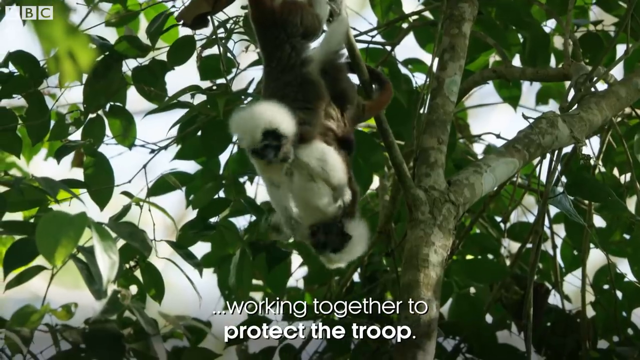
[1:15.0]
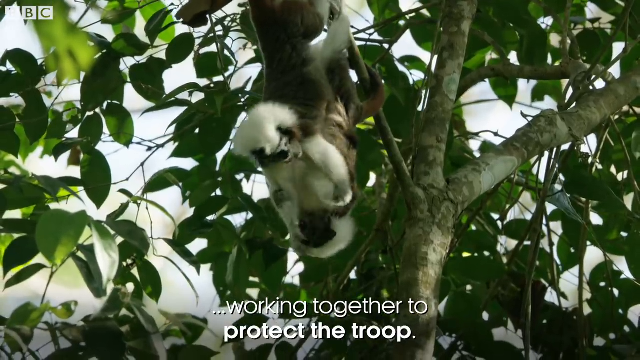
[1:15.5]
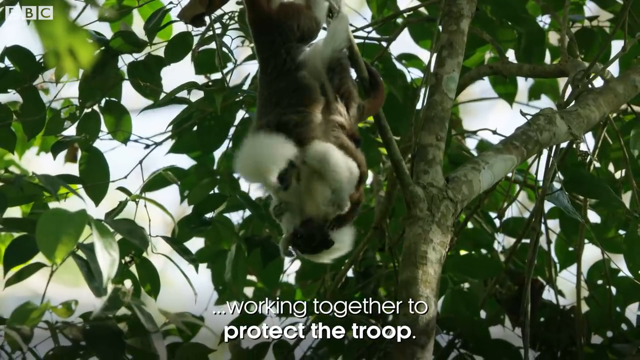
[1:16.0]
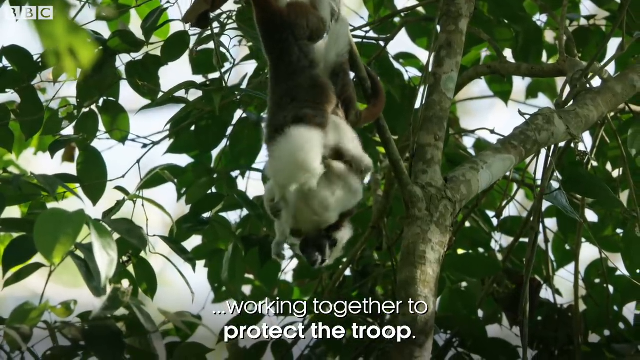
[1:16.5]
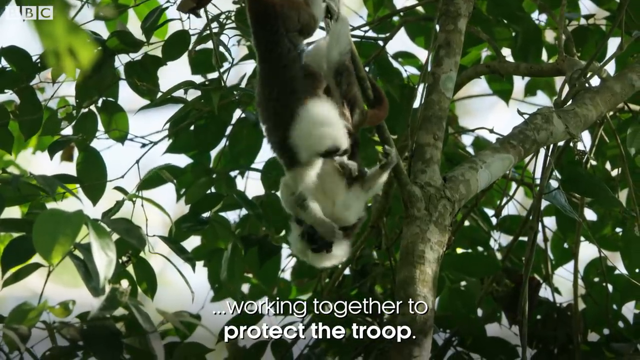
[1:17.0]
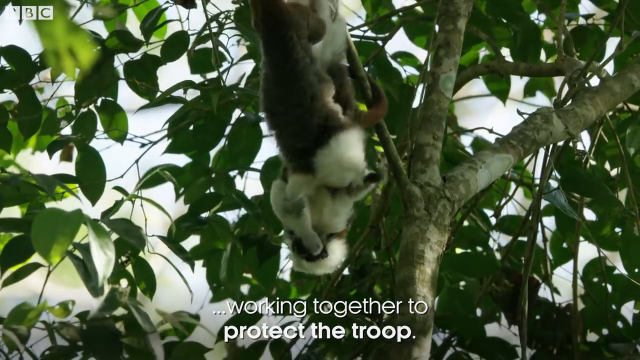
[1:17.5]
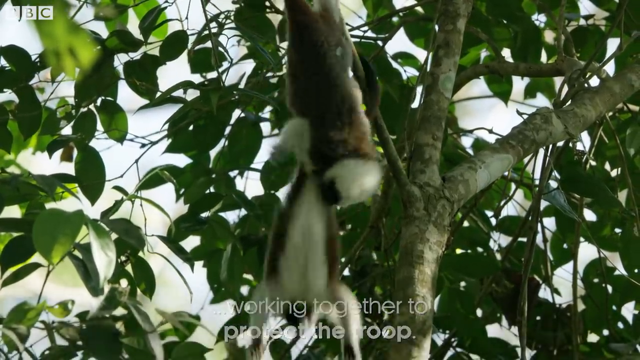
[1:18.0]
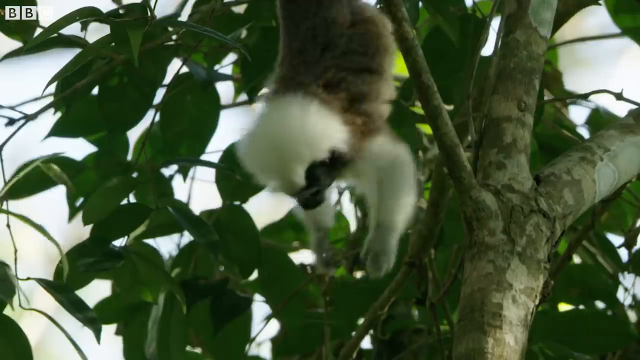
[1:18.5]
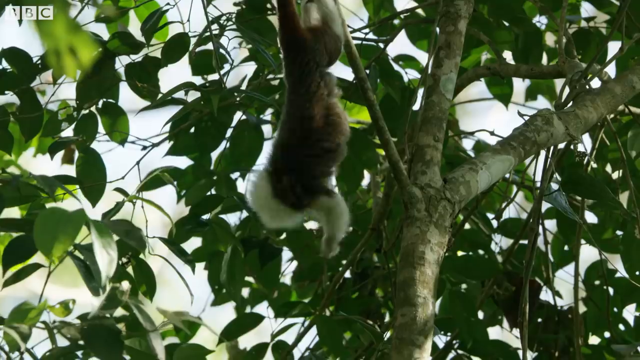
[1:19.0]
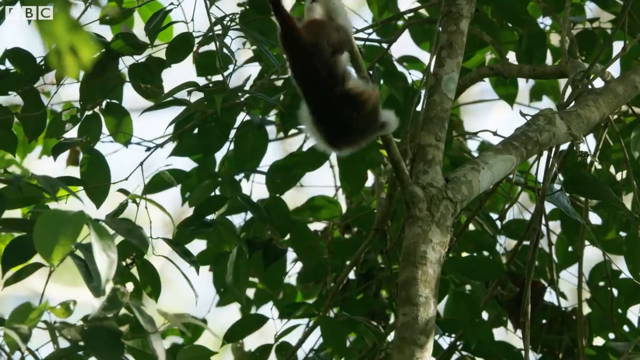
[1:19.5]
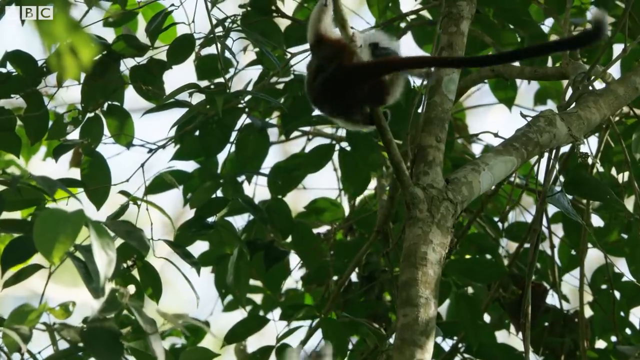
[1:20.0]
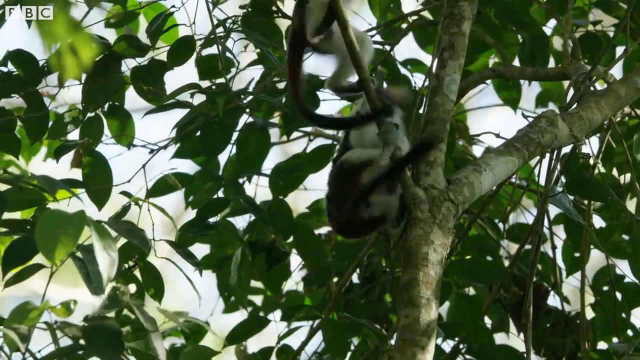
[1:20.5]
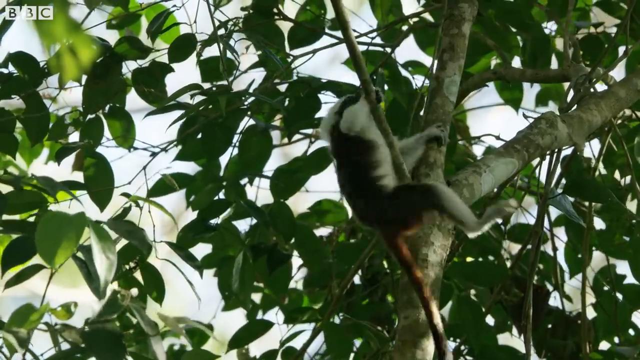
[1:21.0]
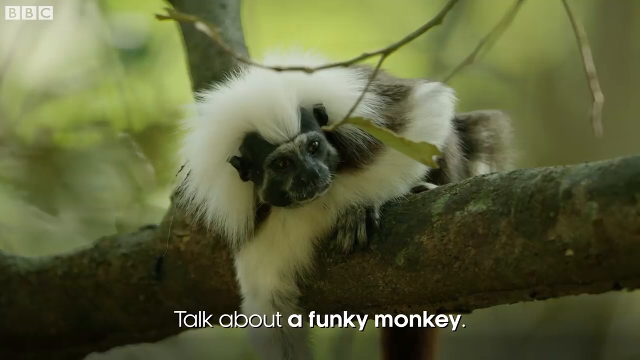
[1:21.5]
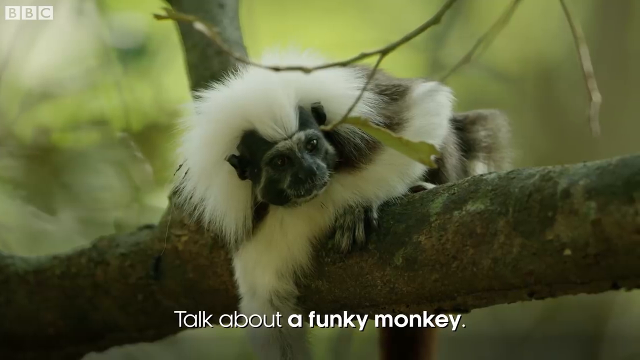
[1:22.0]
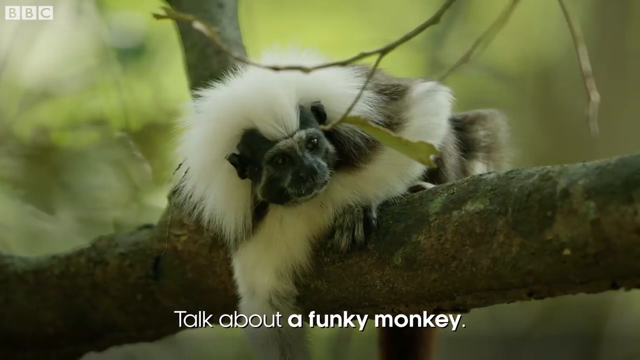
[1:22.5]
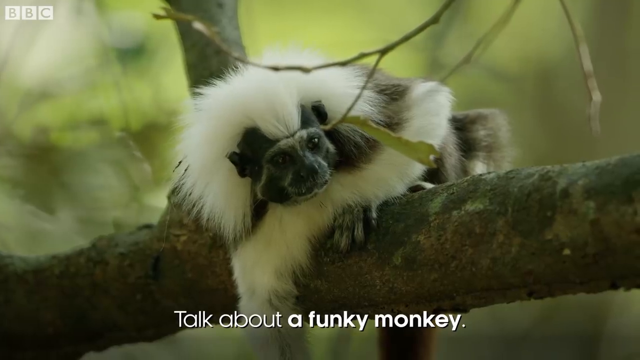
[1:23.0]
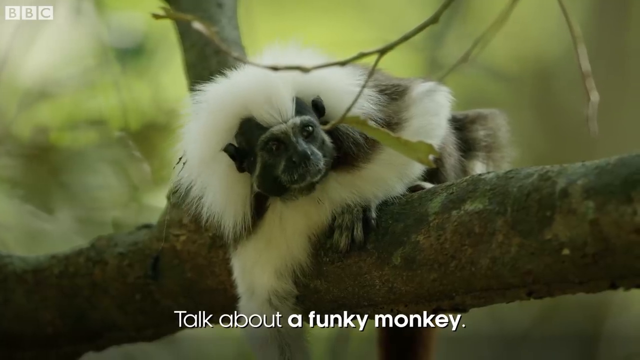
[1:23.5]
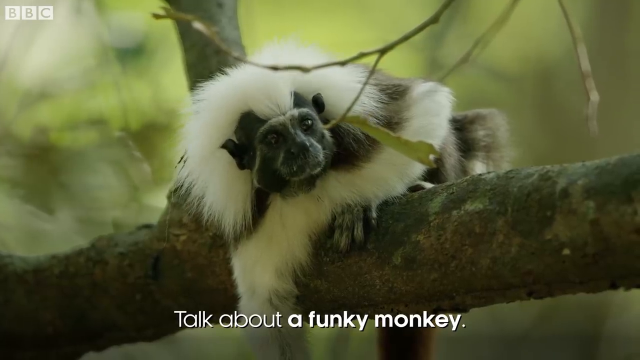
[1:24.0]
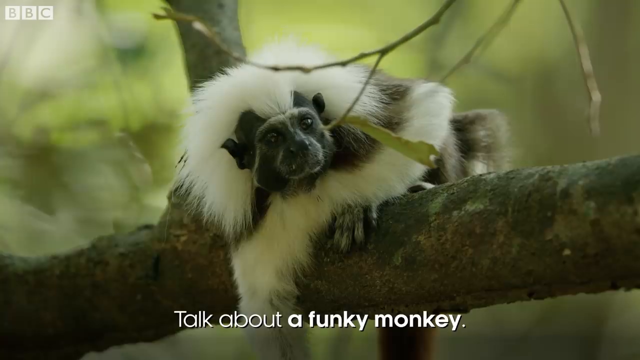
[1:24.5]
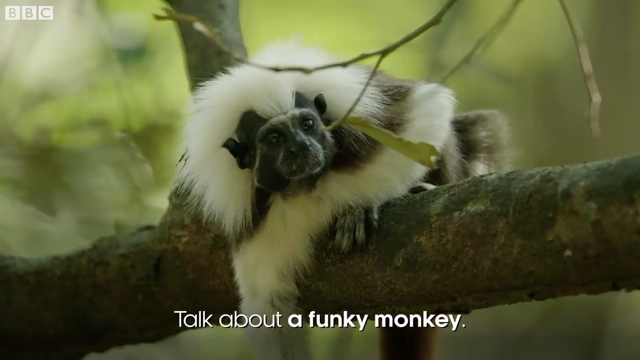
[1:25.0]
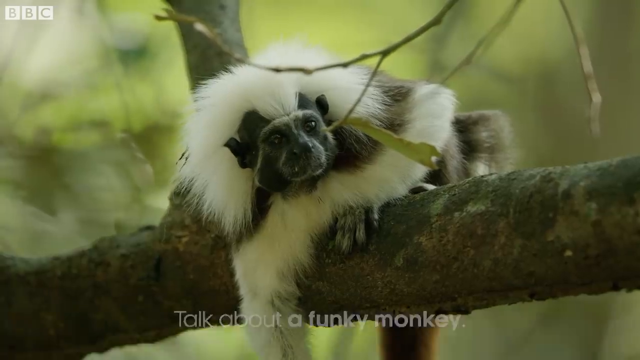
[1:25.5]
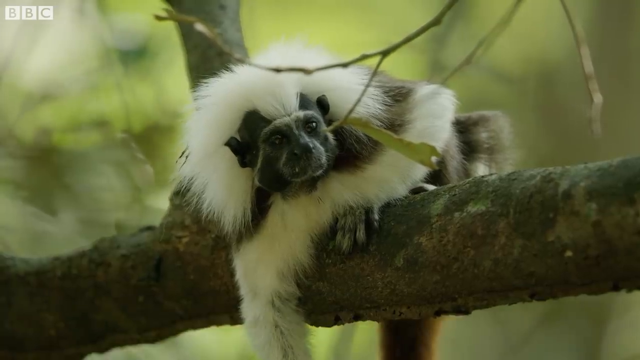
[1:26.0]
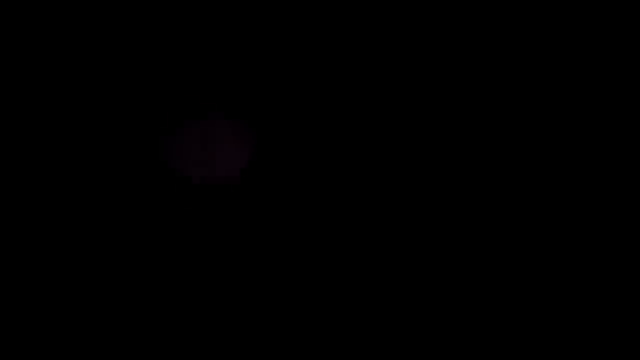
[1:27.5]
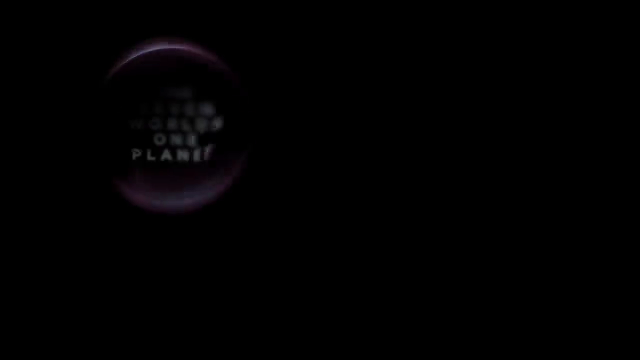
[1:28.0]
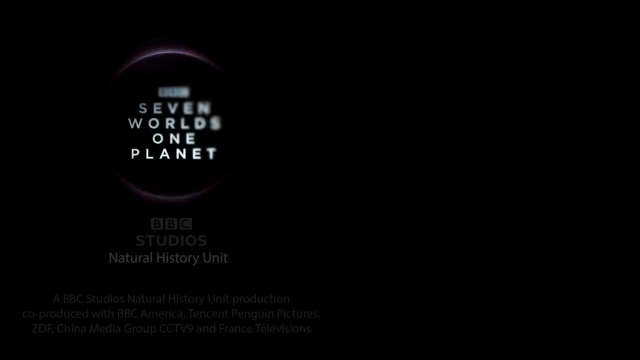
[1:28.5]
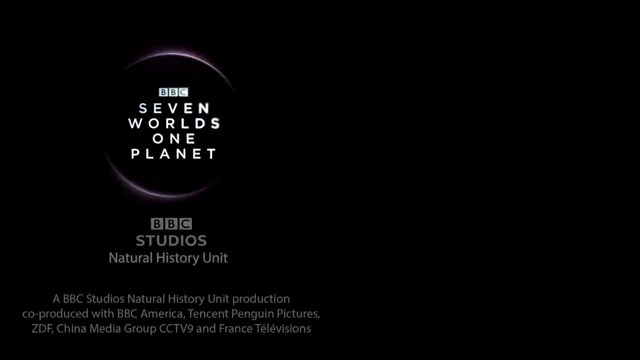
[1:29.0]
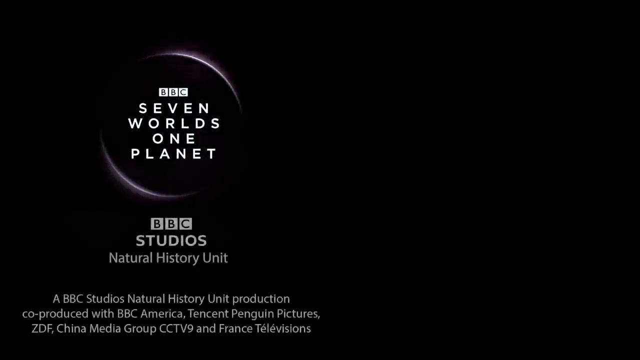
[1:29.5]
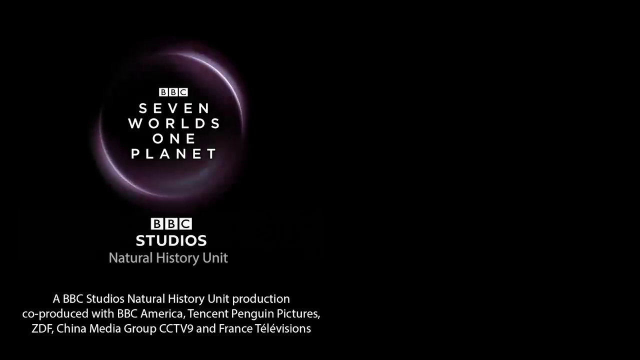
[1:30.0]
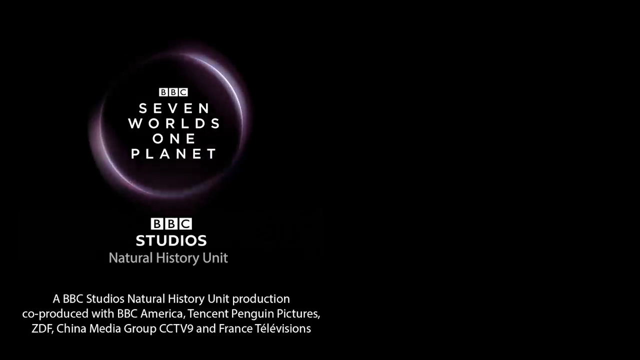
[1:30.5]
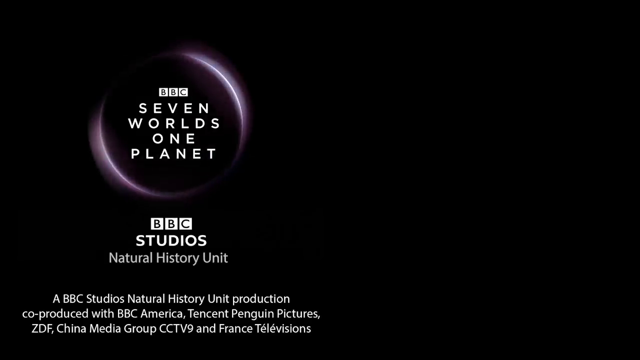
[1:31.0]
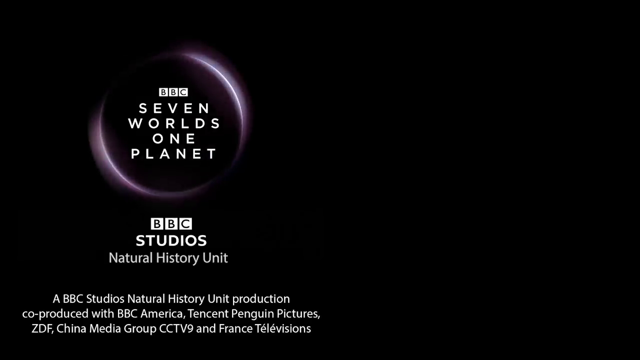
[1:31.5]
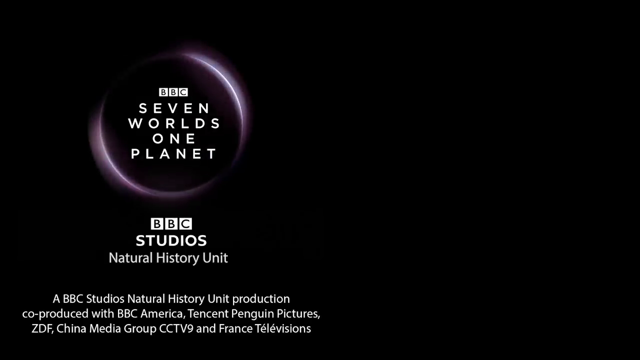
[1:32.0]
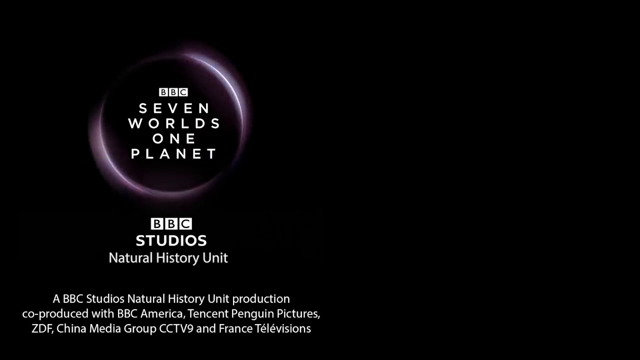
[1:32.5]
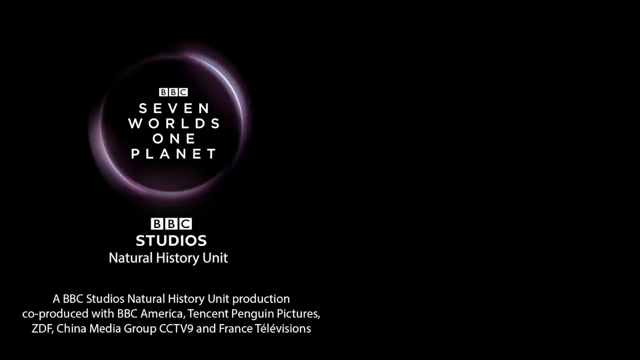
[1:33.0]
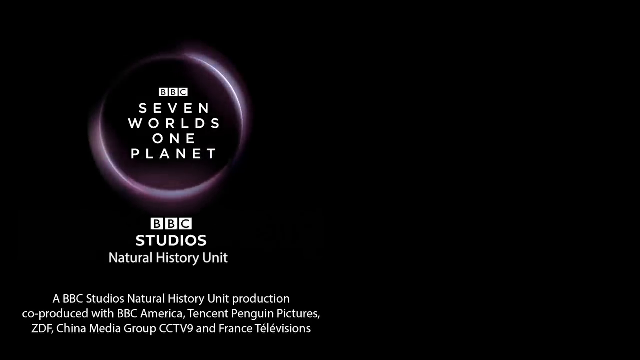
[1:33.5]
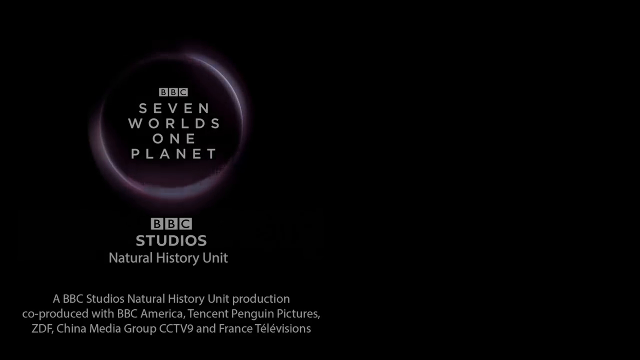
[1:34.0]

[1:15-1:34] Two monkeys dangle from a tree branch by their hind legs, almost like they are hanging and hugging each other. One of them falls and jumps right back up to where the other monkey is. White text at the bottom of the screen reads "Talk about a funky monkey." Another monkey hangs out on a tree branch with his left hand on the branch and his right hand hanging off it, as if lounging. The video then shows "Seven worlds, one planet" enclosed in a neon purple circular planet, like an orb, along with a BBC logo and "BBC Studios natural history unit" with a lot of white text underneath. Text at the bottom left reads "BBC Studios natural history unit production co-produced with BBC America, Tencent, Tangled Pictures."